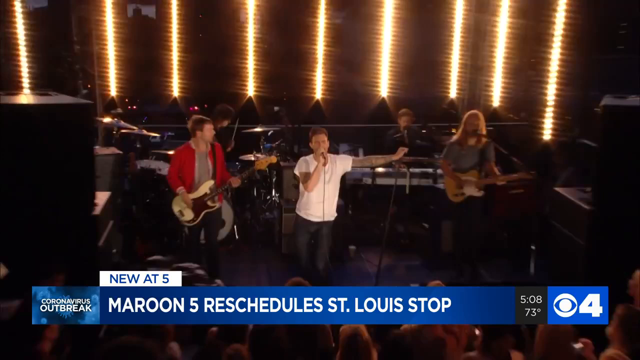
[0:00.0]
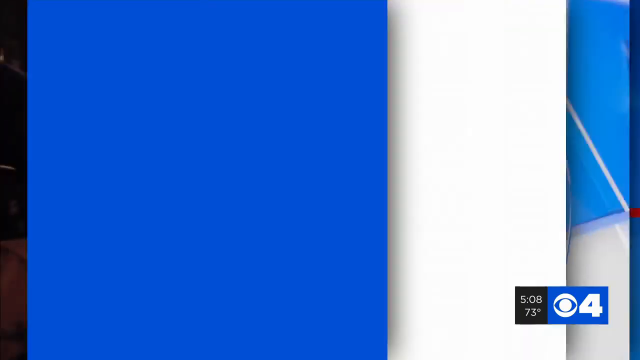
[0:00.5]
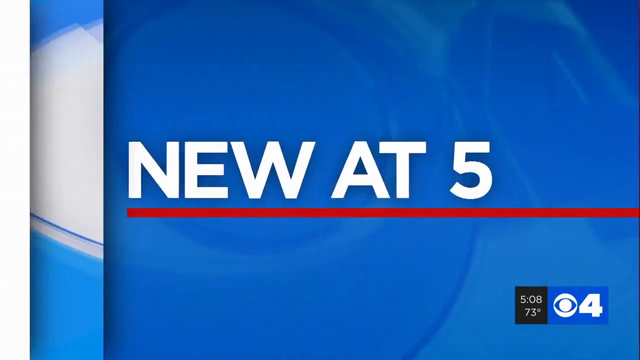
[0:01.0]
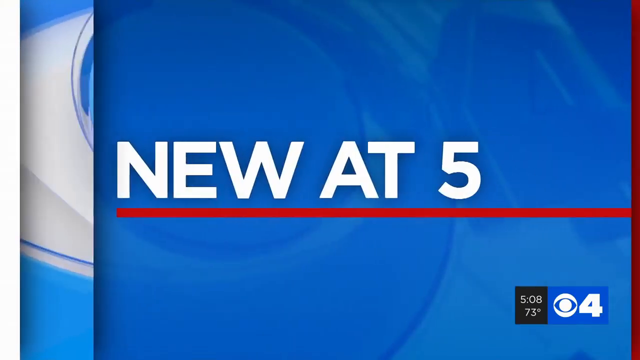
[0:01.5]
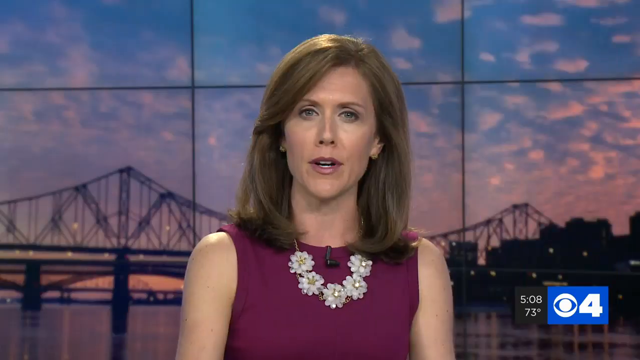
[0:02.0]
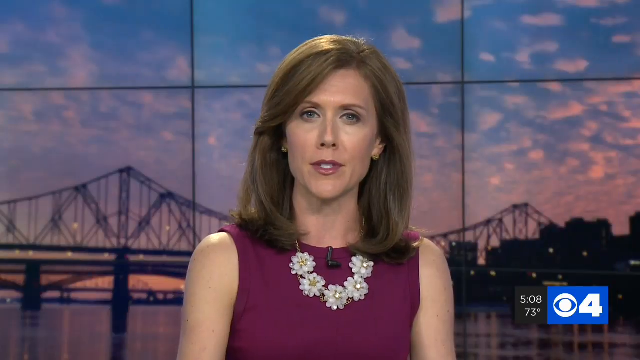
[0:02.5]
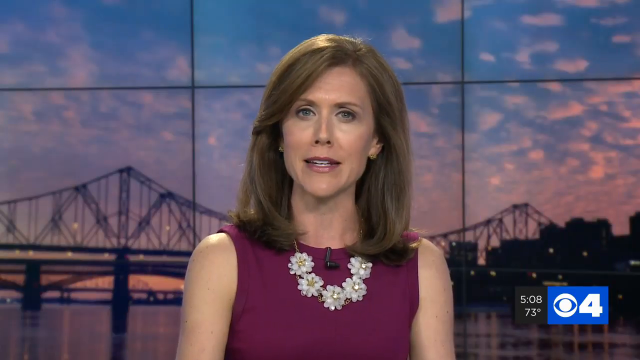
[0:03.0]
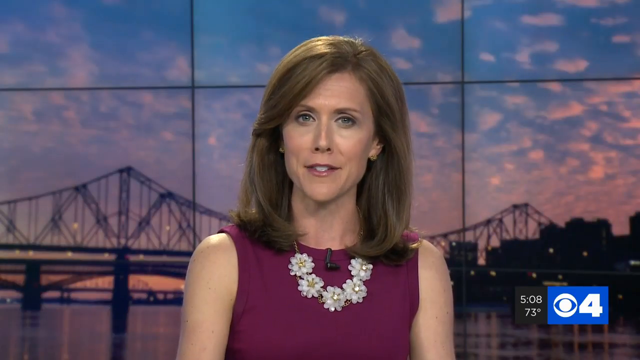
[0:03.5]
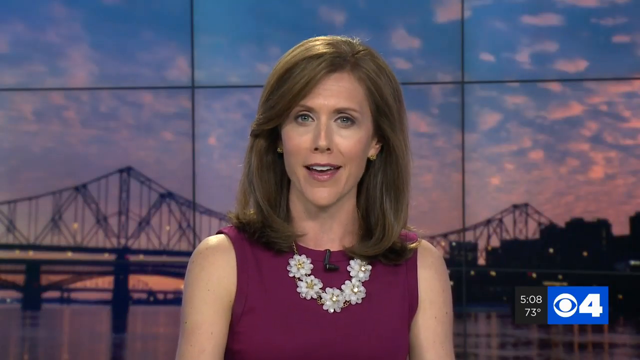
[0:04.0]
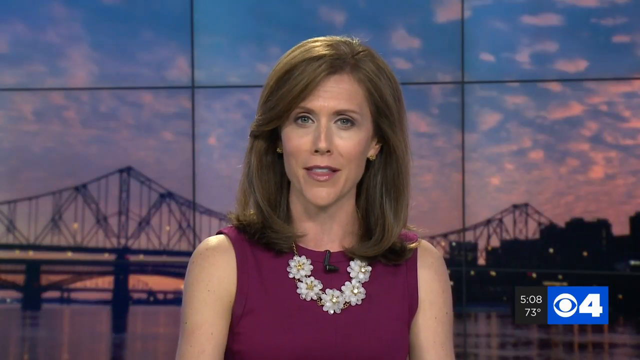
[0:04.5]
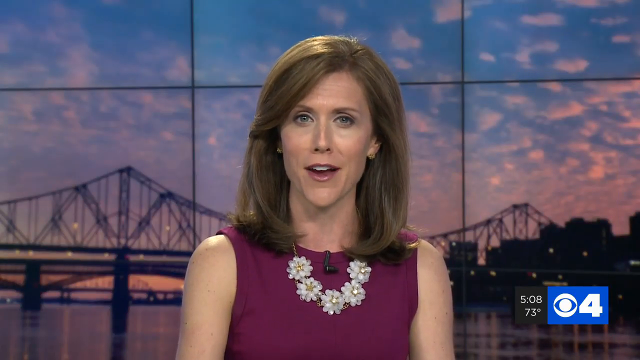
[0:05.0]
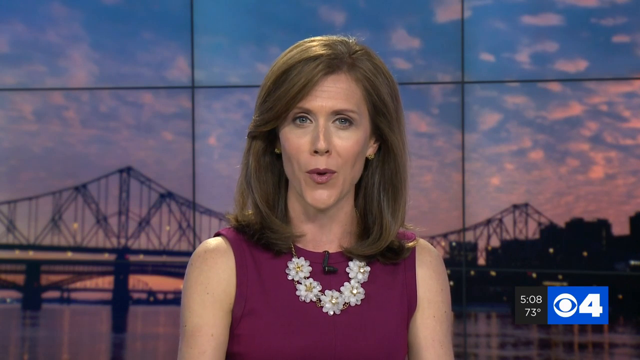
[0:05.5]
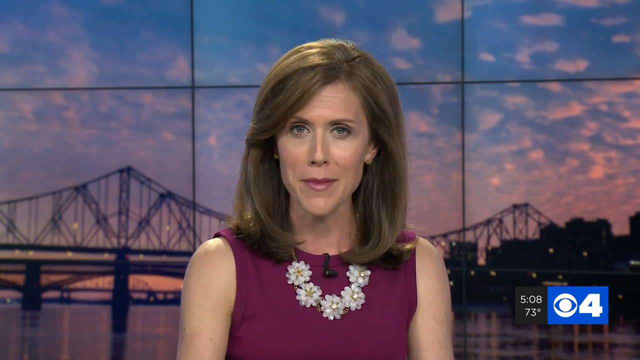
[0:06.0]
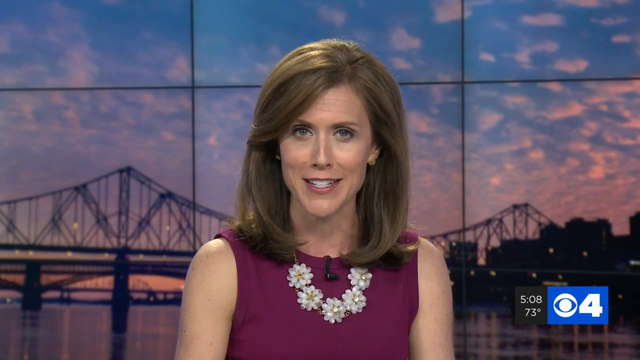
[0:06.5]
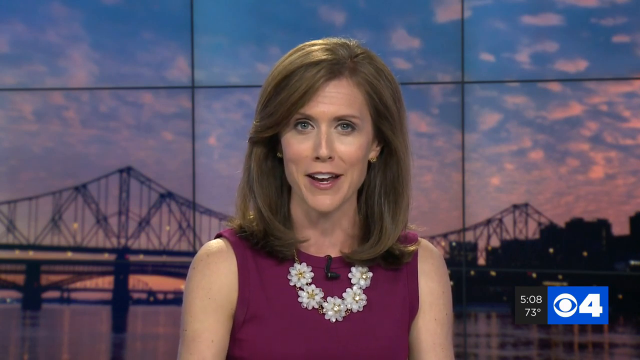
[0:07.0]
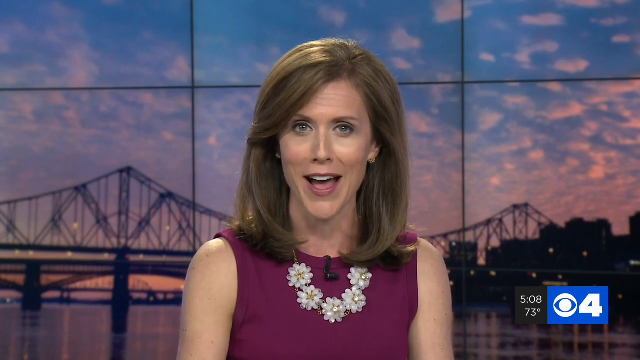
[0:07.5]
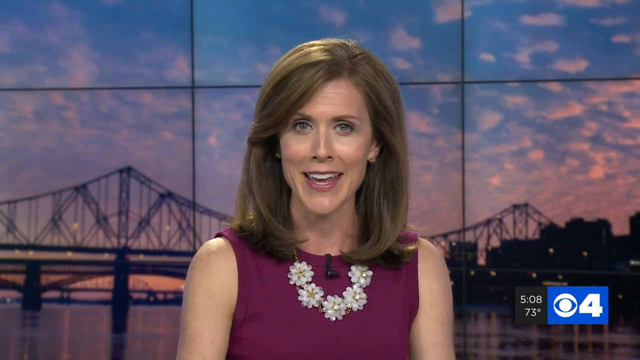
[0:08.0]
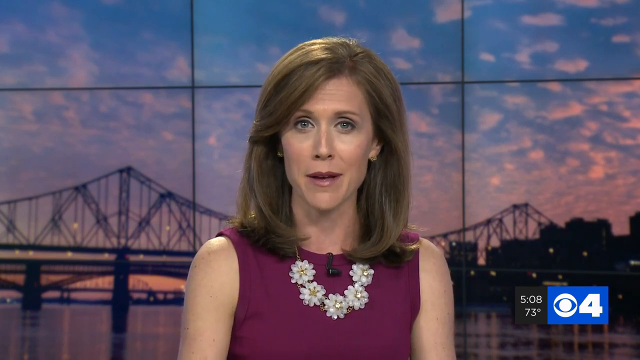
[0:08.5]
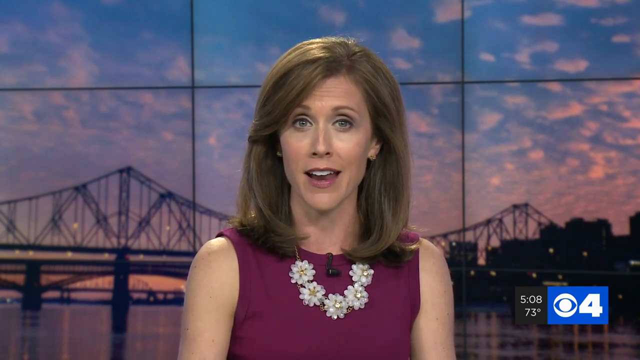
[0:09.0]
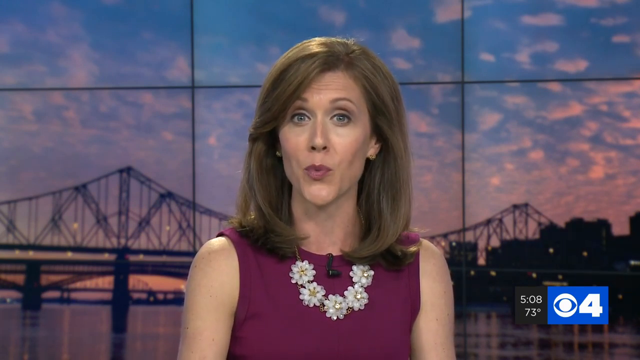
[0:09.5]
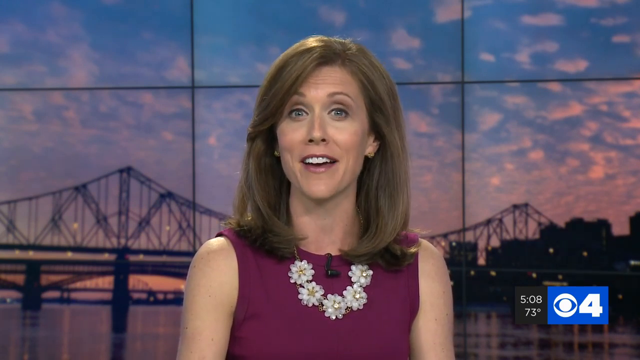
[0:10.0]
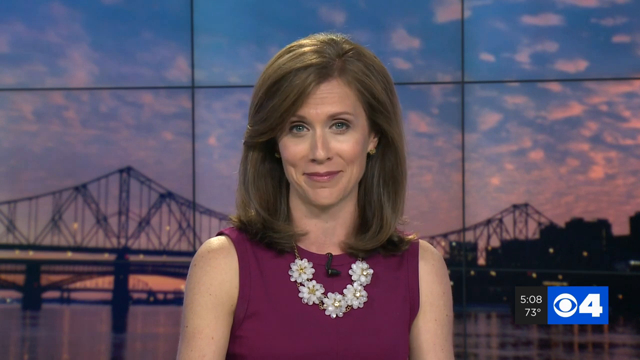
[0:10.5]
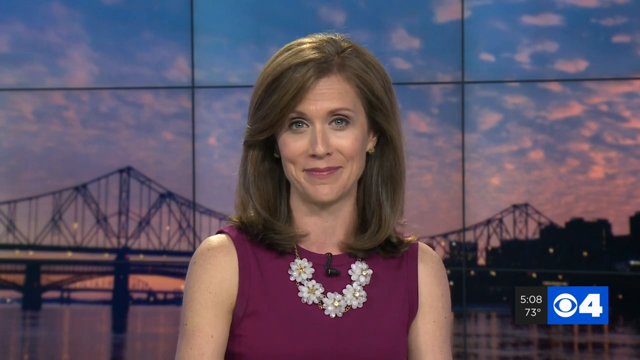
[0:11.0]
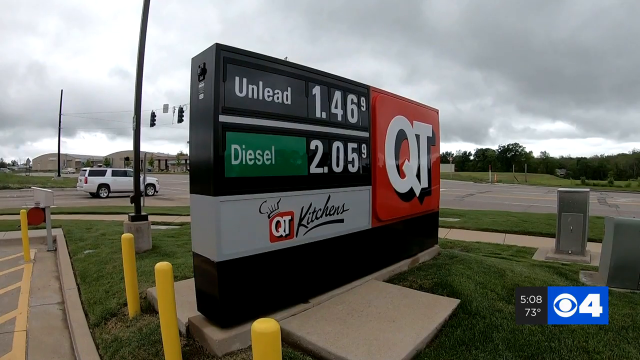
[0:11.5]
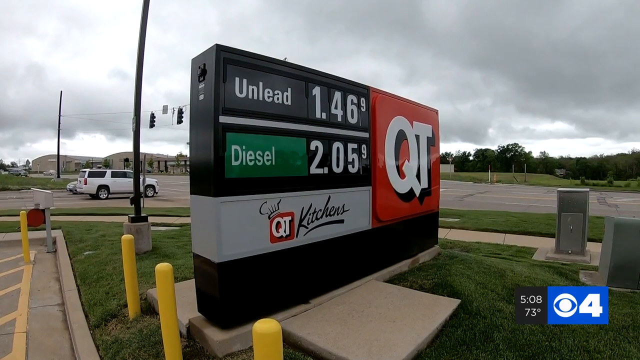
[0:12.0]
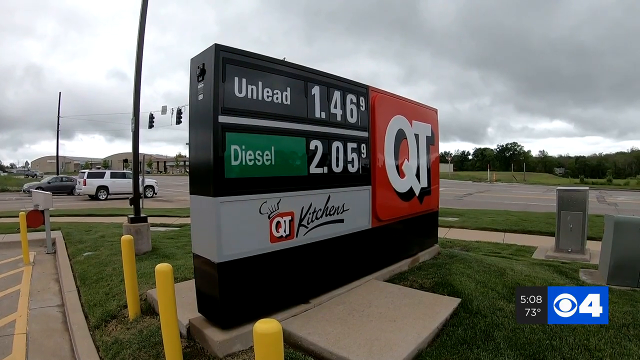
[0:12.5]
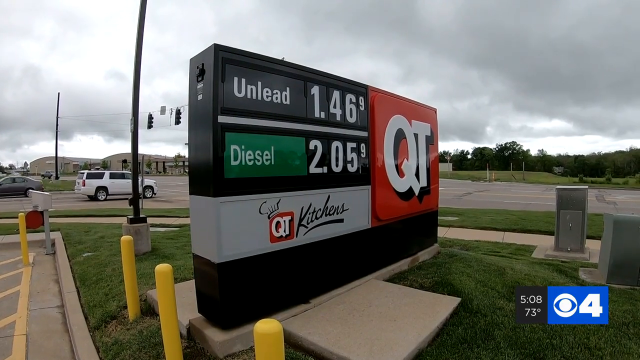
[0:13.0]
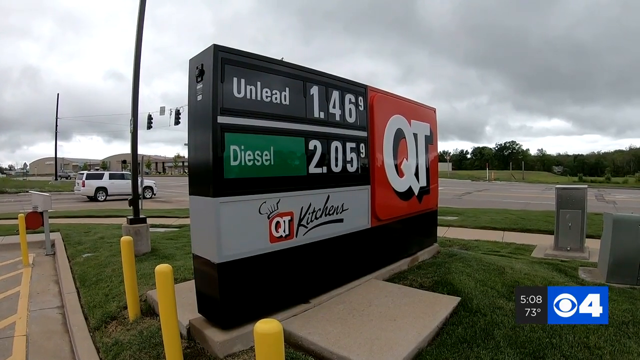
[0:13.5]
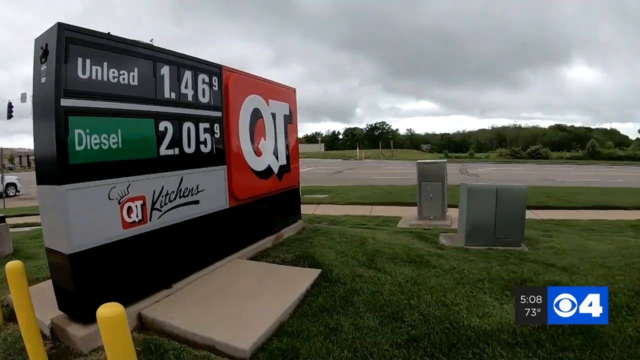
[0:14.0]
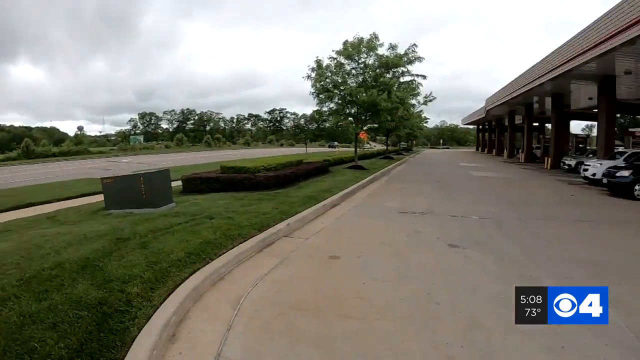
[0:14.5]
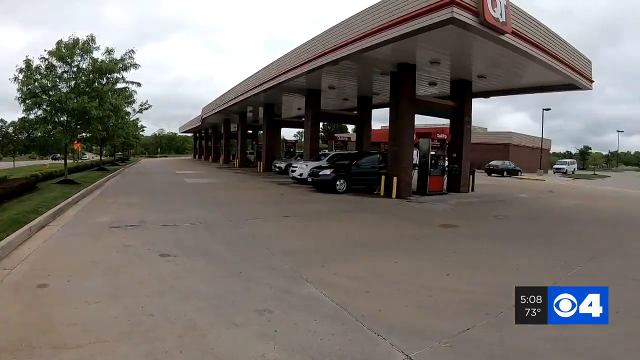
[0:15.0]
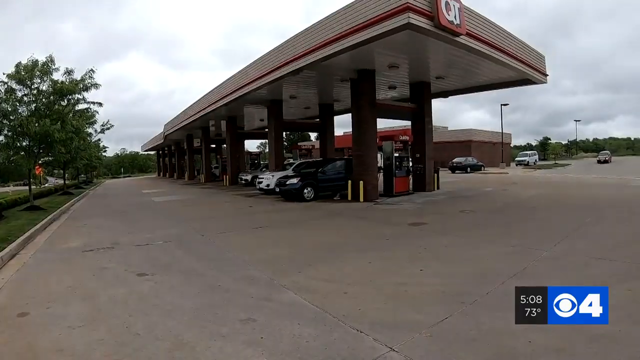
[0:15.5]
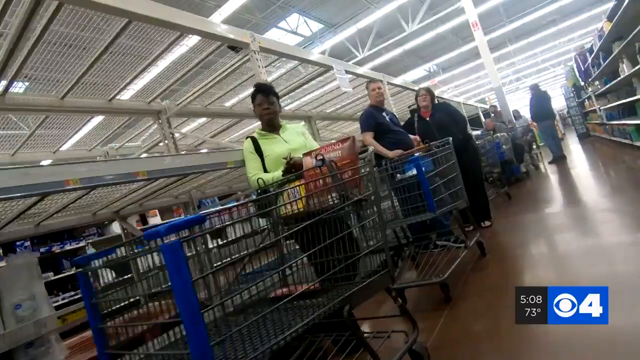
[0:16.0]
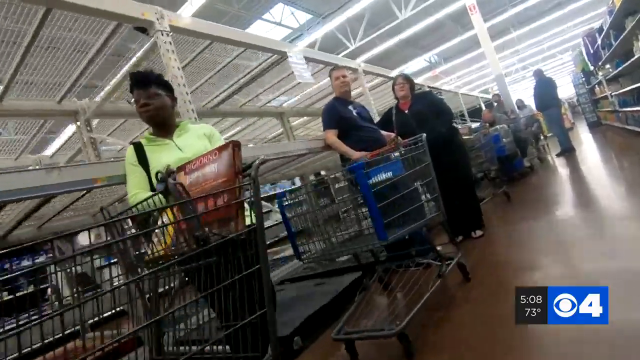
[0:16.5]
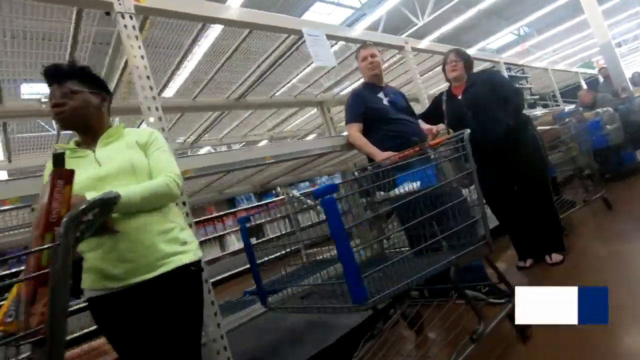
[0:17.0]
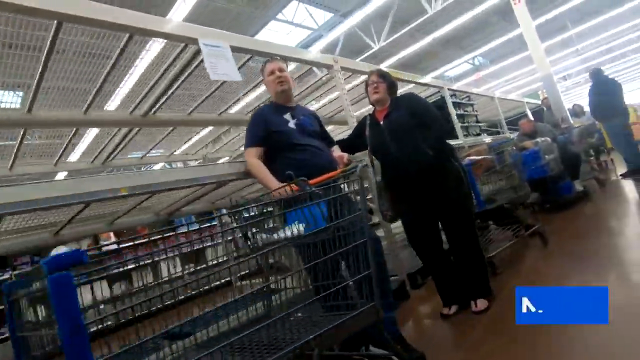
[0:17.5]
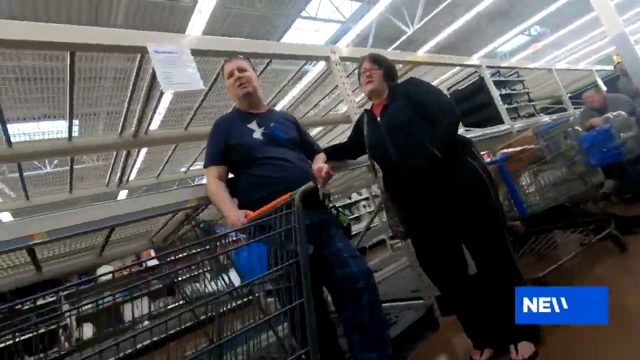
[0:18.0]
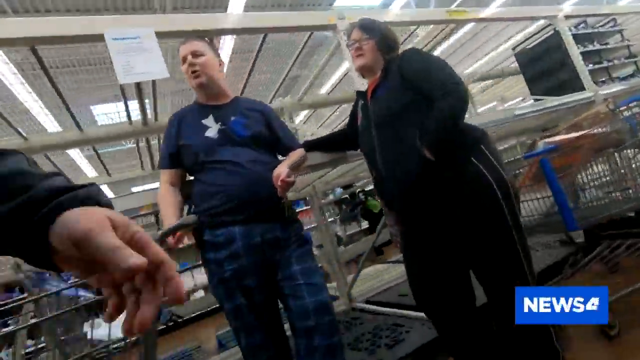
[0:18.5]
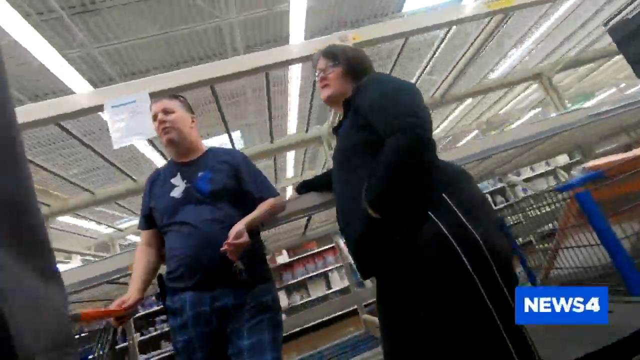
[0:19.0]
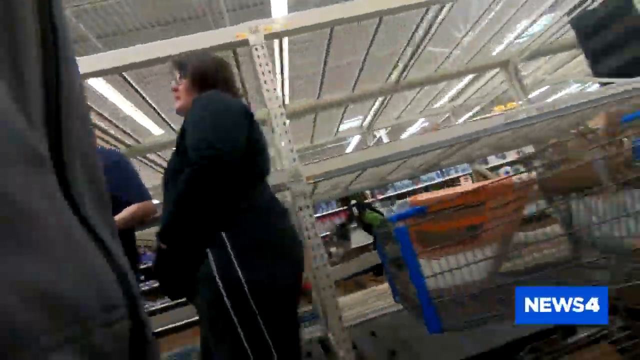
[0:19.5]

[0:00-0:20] A News Channel 5 report covers the coronavirus outbreak and Maroon 5 rescheduling their St. Louis stop, with a picture of Maroon 5 on the screen. One man wears a red long-sleeved jacket over a gray shirt and blue jeans and has a guitar in his hand. Another man, who looks like the lead singer, has a mic in his hand and wears a white short-sleeved shirt with blue jeans. Next to him is a man in a gray short-sleeved shirt with long blonde hair, holding a guitar. Behind him a man is playing a piano, and another man is playing the guitar. The video then goes to a newscaster, a Caucasian woman with long blonde hair in a sleeveless maroon shirt, wearing a necklace with four what look like white flowers on it and yellow earrings. Next it shows the QT gas station with gas prices: unleaded at $1.46 and diesel at $2.05. Then people are standing in a very long line at some type of store.